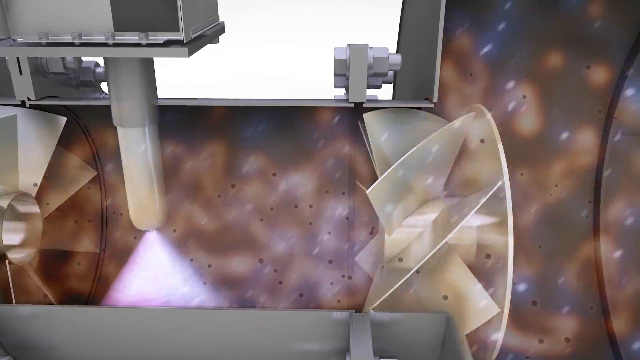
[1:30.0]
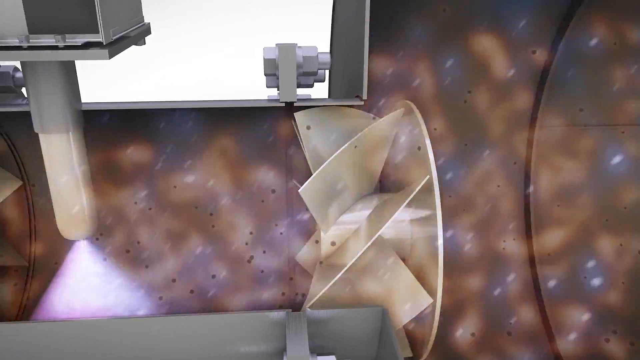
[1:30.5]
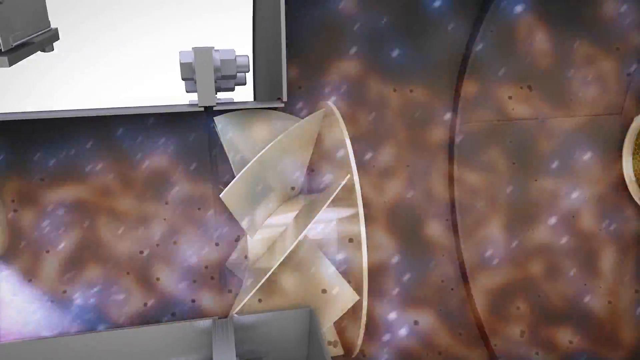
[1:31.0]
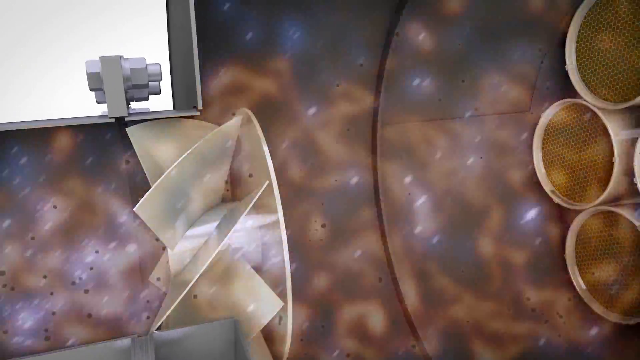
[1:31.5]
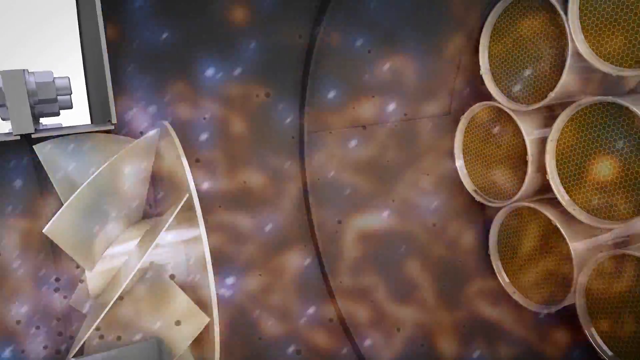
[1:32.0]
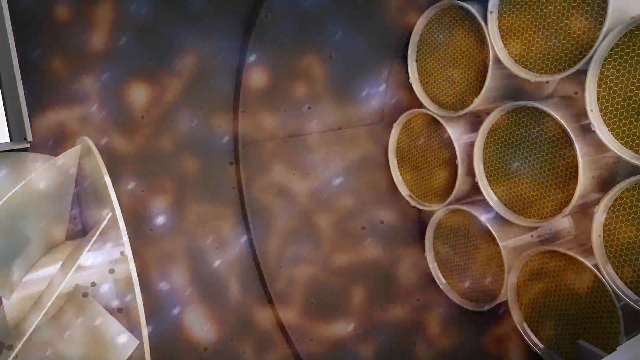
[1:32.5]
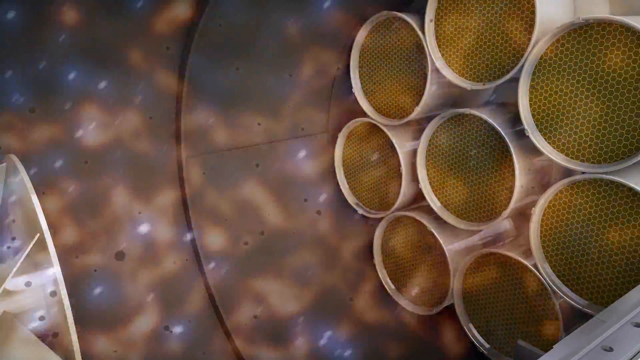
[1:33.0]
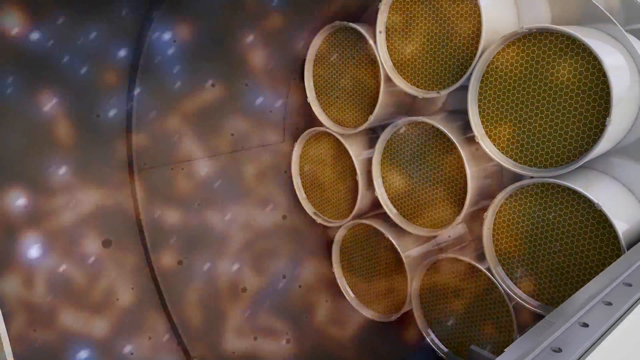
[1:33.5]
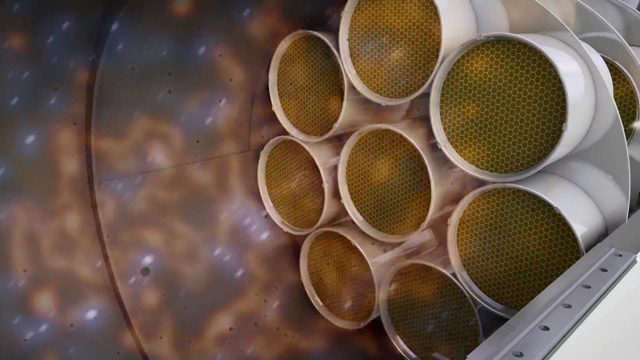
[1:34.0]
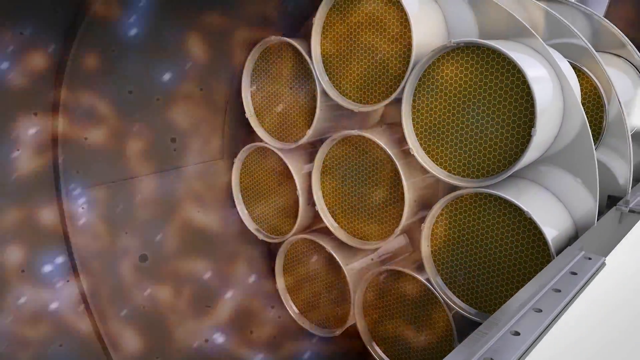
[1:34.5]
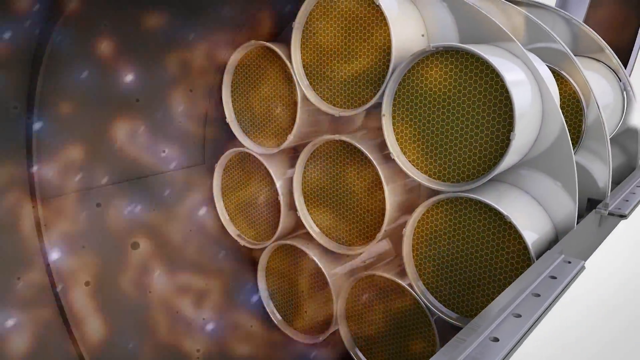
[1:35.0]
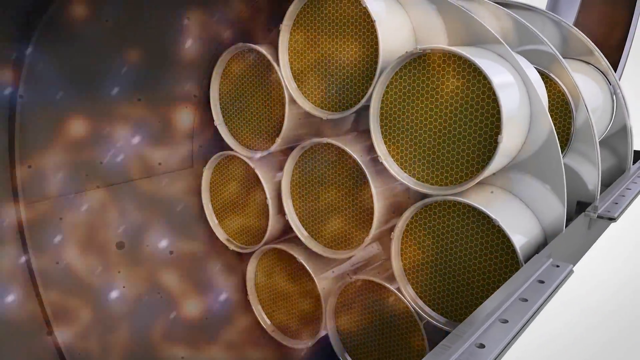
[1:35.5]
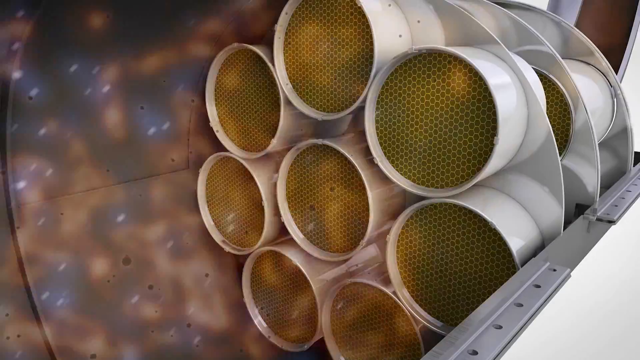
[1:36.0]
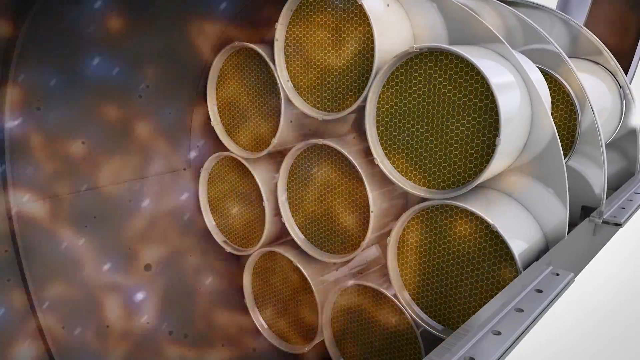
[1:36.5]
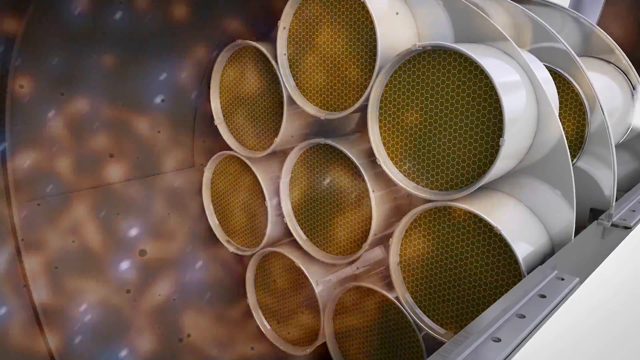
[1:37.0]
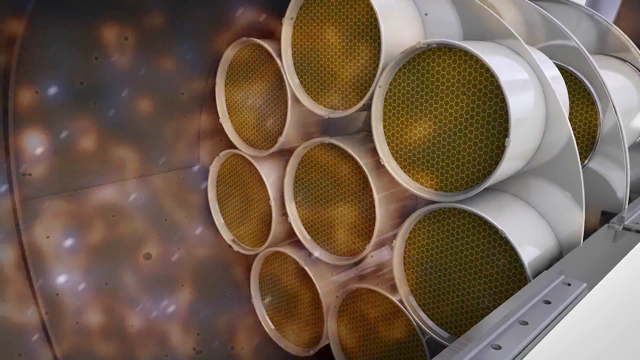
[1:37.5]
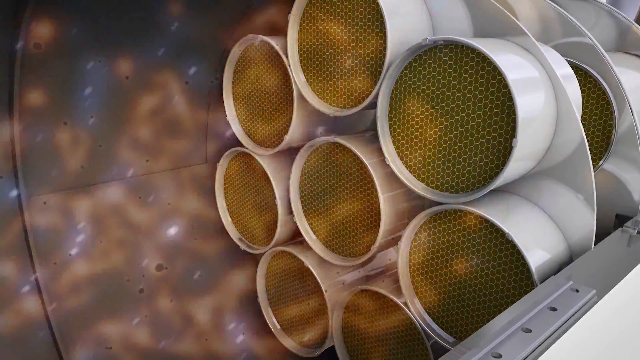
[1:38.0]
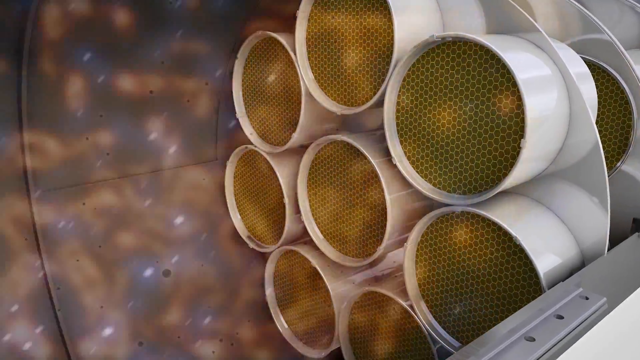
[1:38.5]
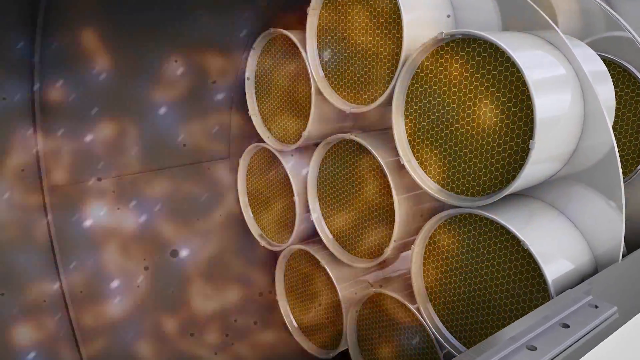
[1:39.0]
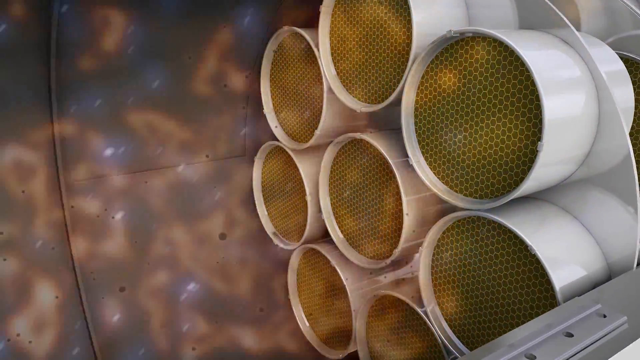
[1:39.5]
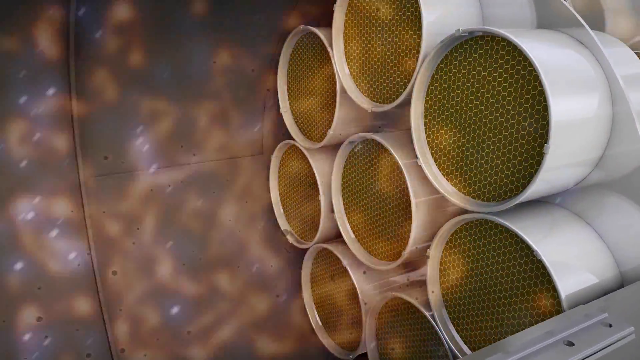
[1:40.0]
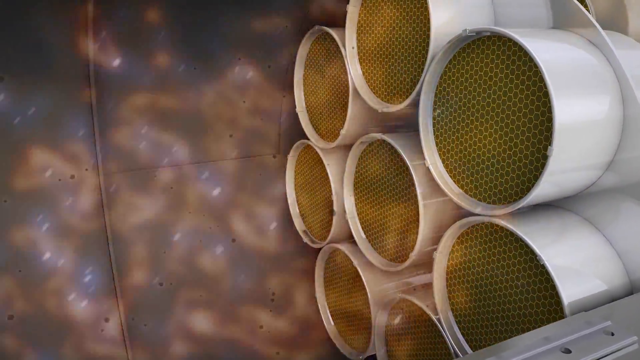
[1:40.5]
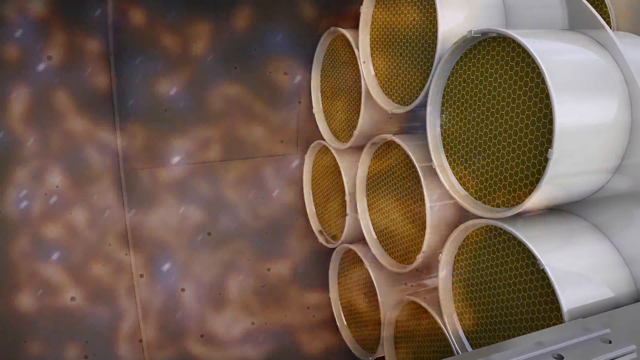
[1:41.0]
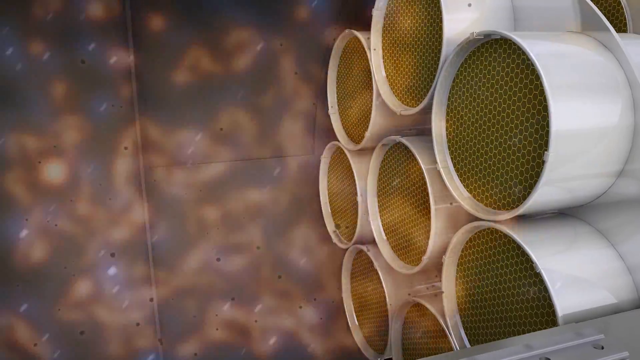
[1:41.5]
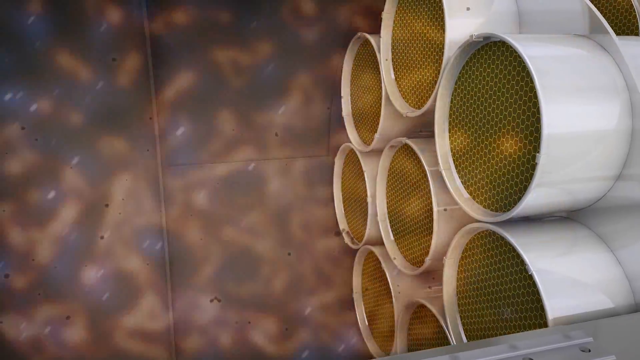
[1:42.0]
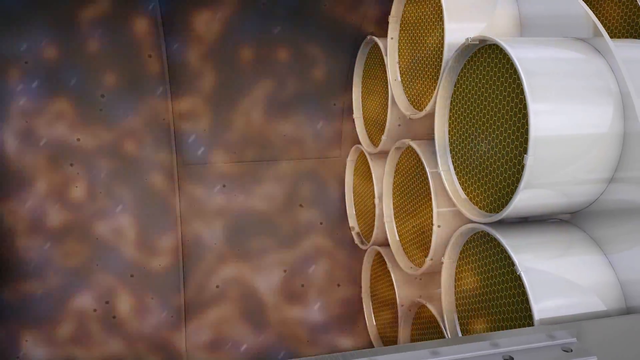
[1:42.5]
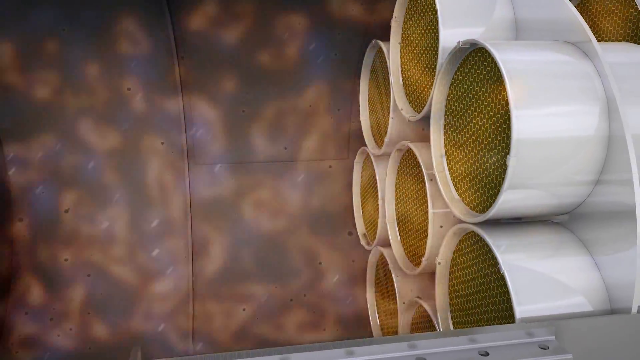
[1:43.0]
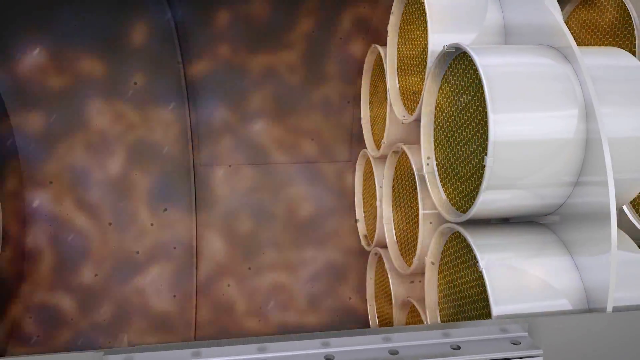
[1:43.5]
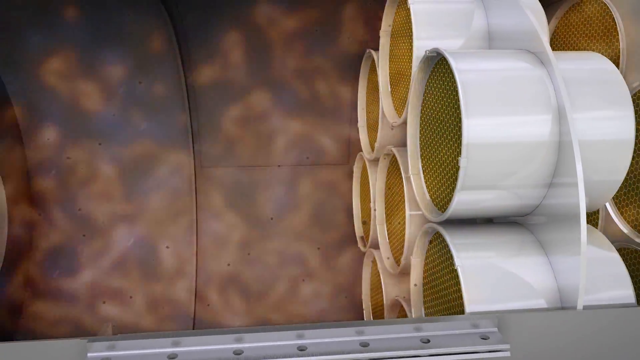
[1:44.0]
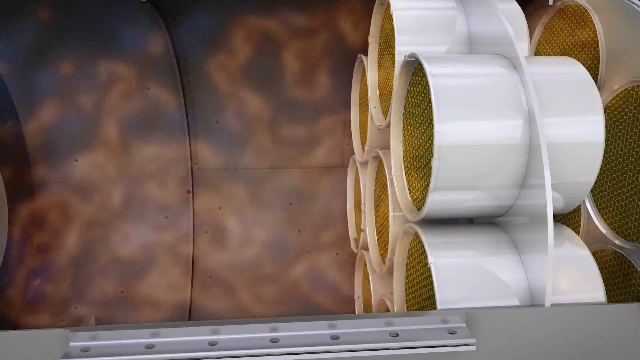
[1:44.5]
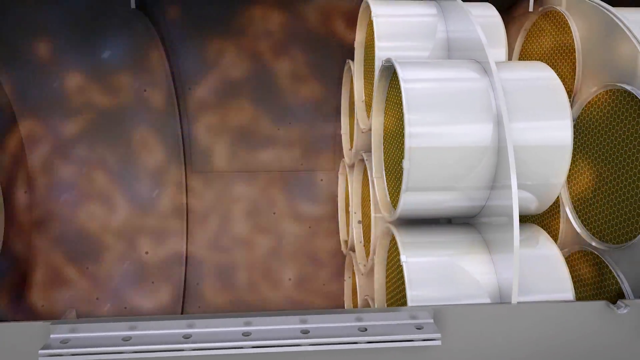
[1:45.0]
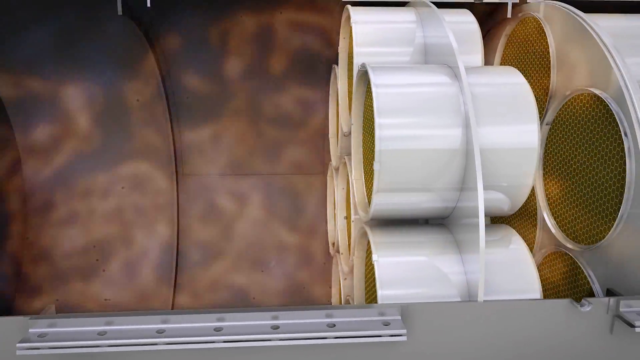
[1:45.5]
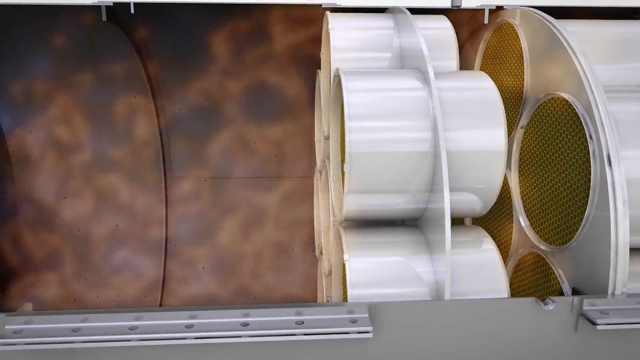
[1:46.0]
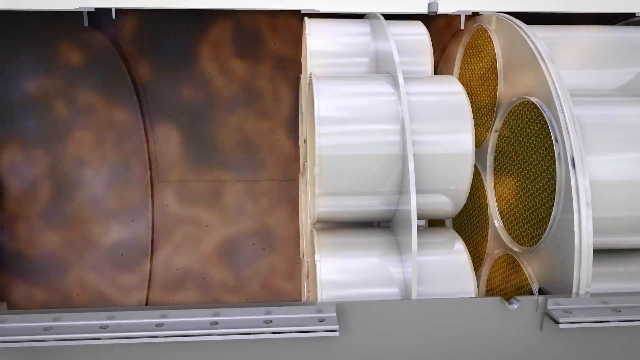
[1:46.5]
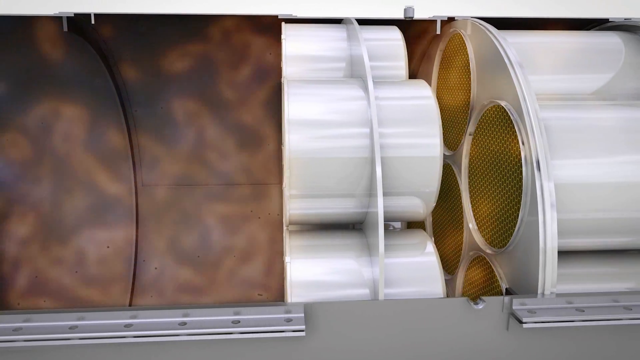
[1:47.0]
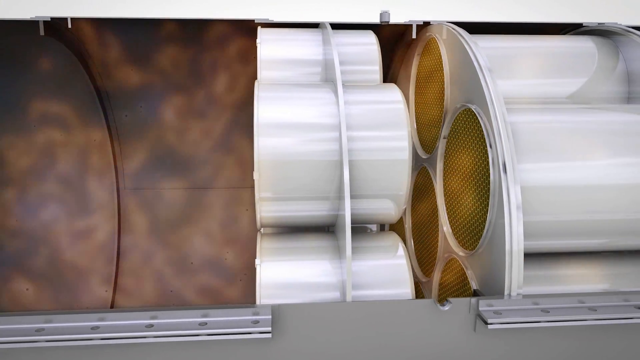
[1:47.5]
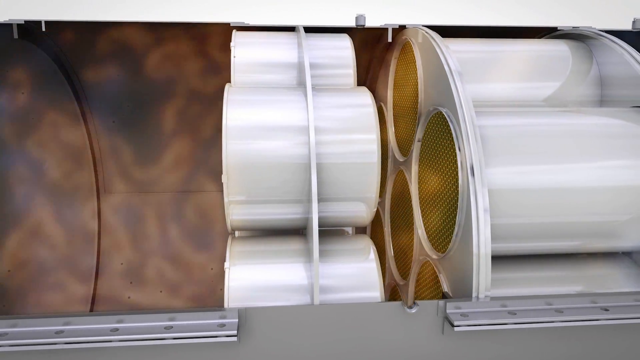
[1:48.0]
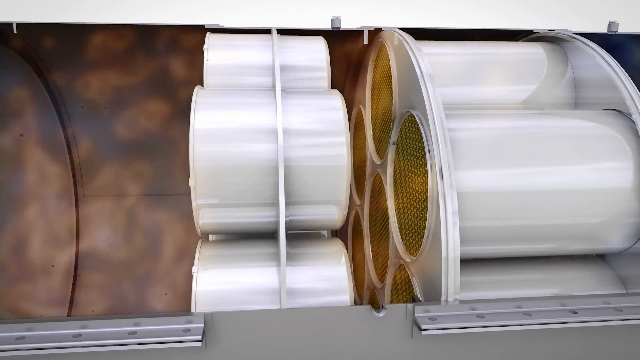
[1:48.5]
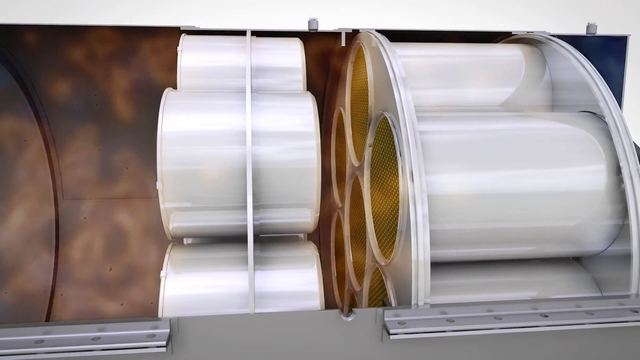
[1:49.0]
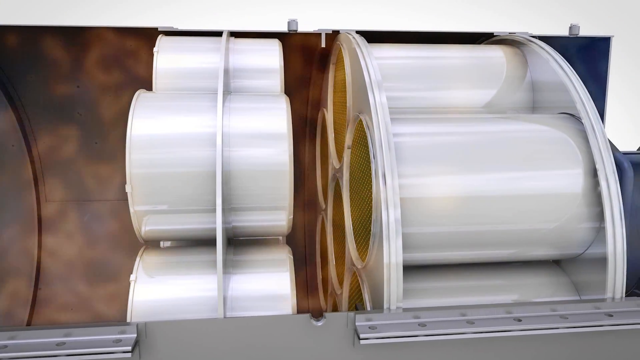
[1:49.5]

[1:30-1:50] Orange air continues flowing through another circular structure made of eight yellow circles lined up together. There are two of these circular structures, and as the air flows through, a blue particle that is kind of glowing also appears. Each structure consists of seven circles like mini pipes arranged around each other to form a circle, with one more piece right in the middle, so it is kind of shaped like a flower. Within each petal are tiny yellow octagons, so it kind of looks like a beehive, and all of the air goes into the holes of the beehive.